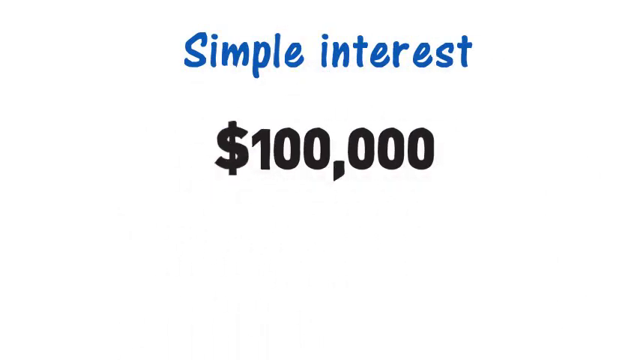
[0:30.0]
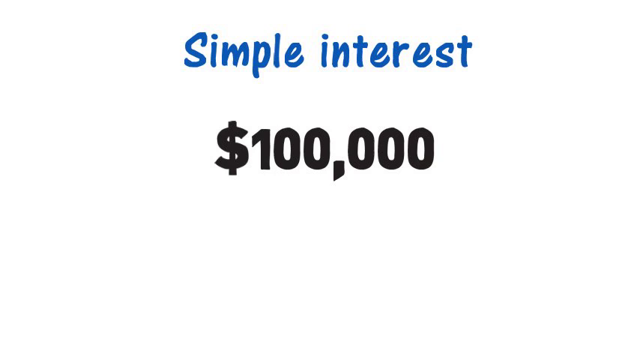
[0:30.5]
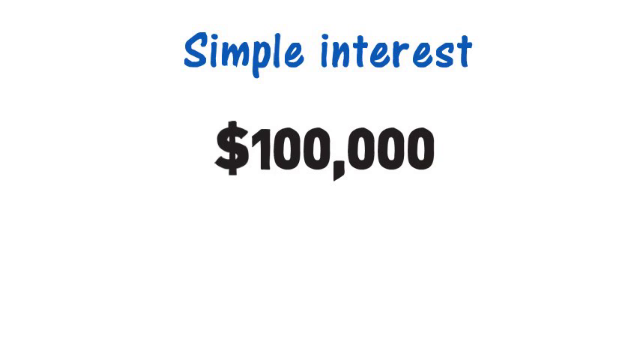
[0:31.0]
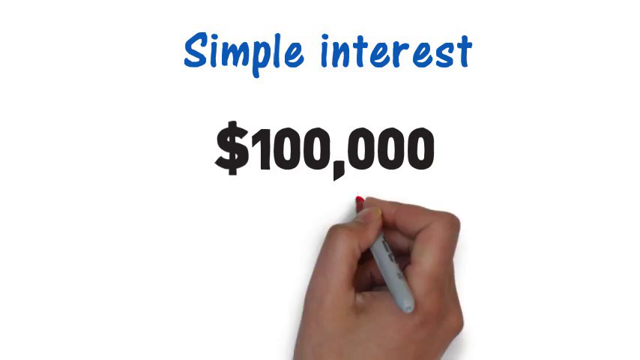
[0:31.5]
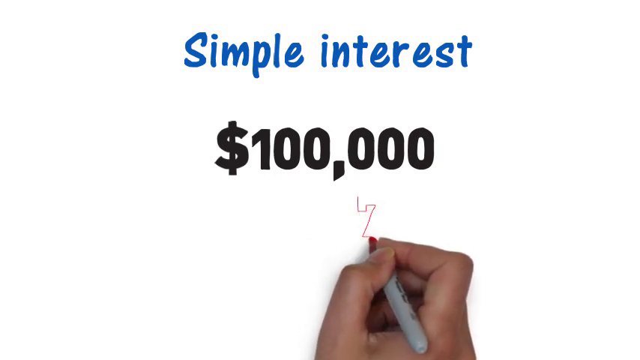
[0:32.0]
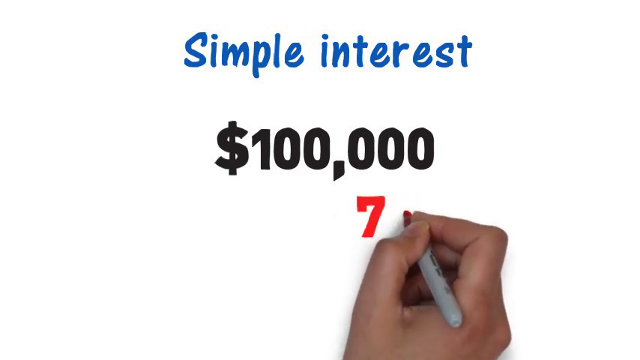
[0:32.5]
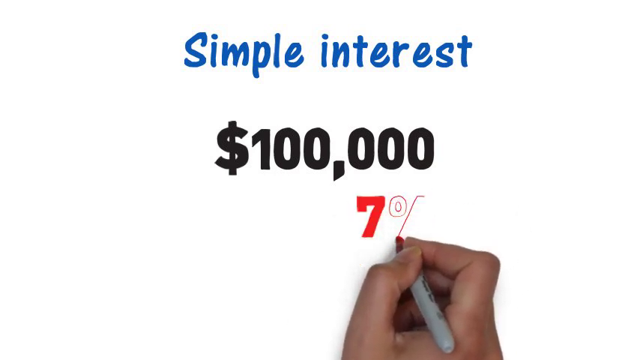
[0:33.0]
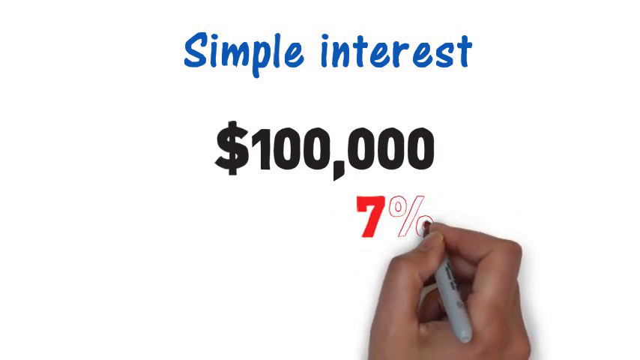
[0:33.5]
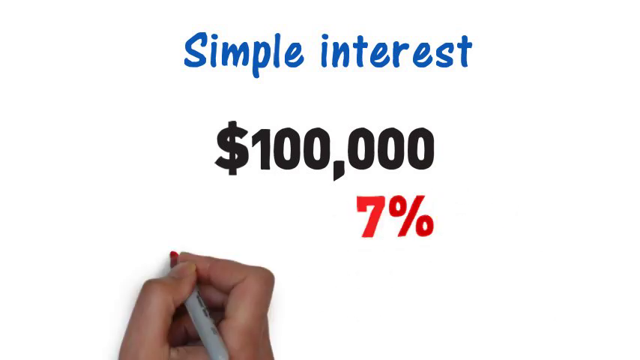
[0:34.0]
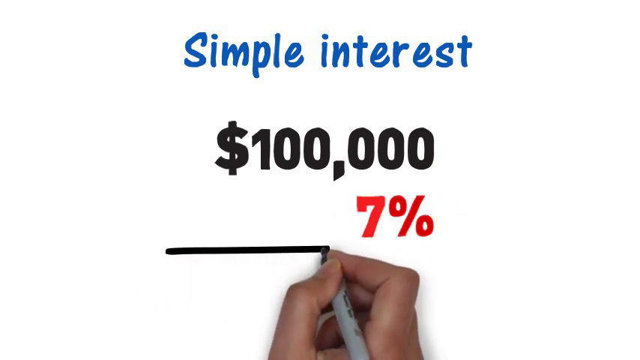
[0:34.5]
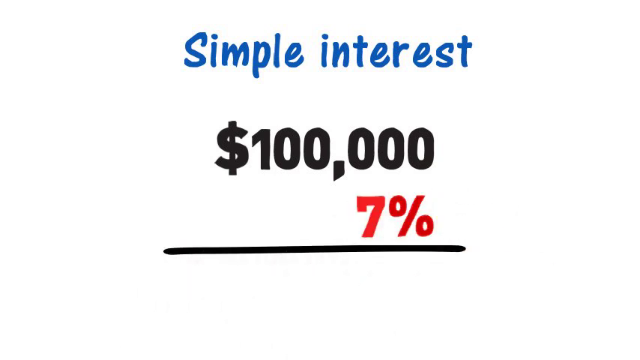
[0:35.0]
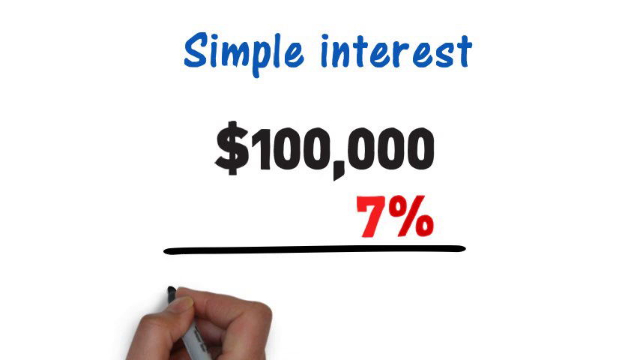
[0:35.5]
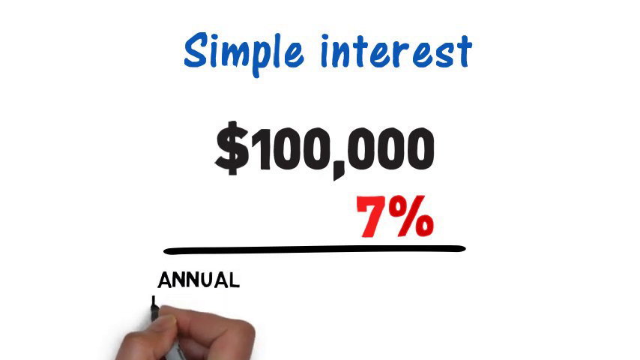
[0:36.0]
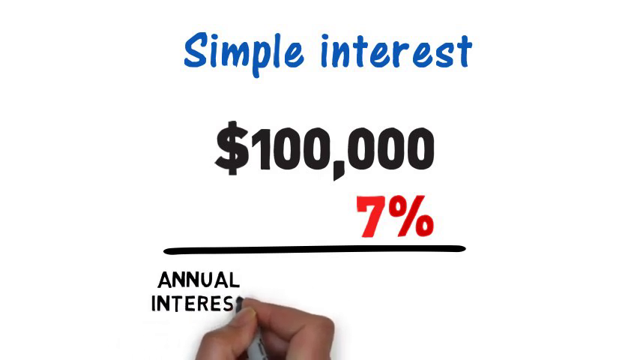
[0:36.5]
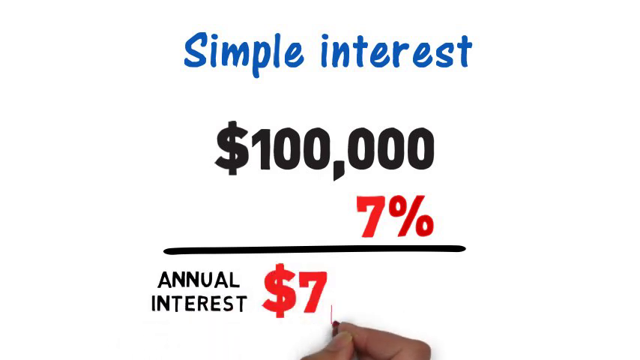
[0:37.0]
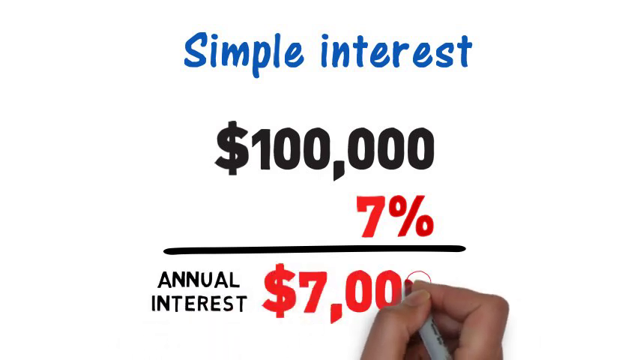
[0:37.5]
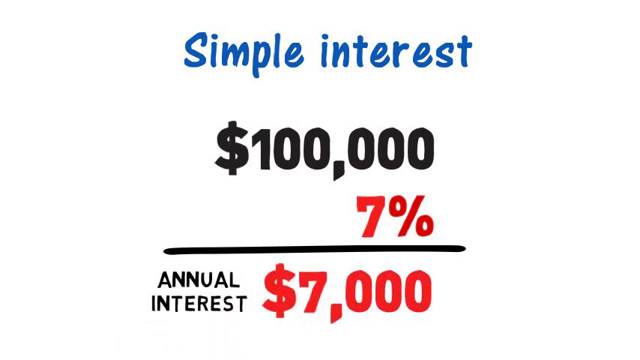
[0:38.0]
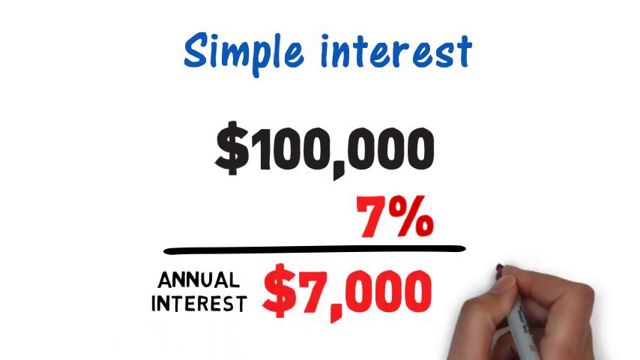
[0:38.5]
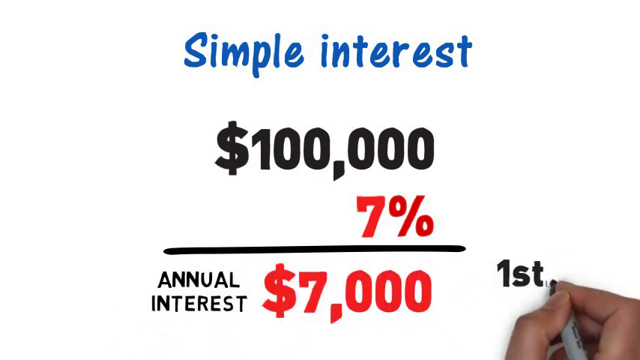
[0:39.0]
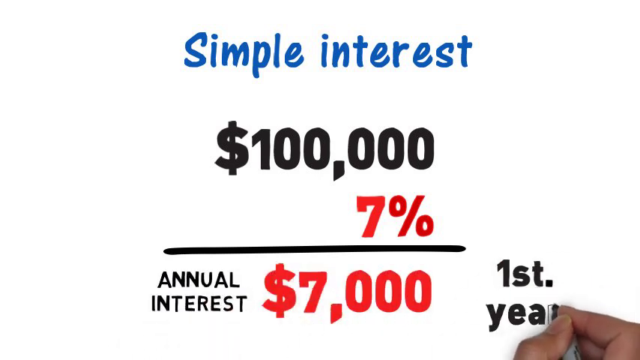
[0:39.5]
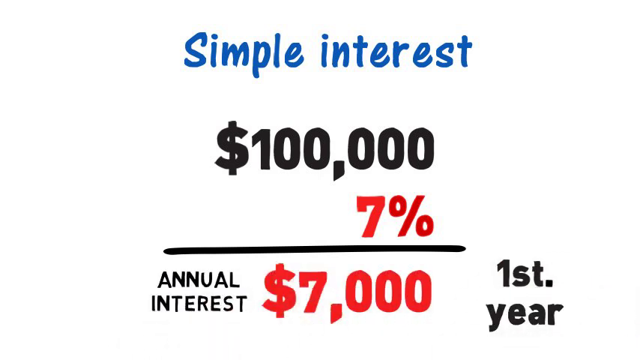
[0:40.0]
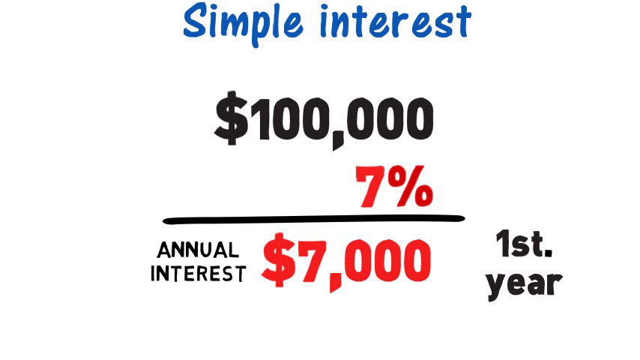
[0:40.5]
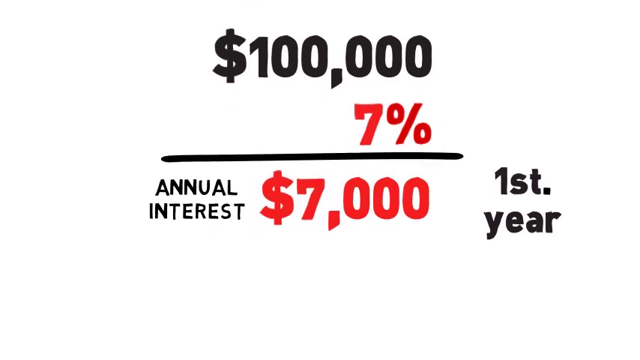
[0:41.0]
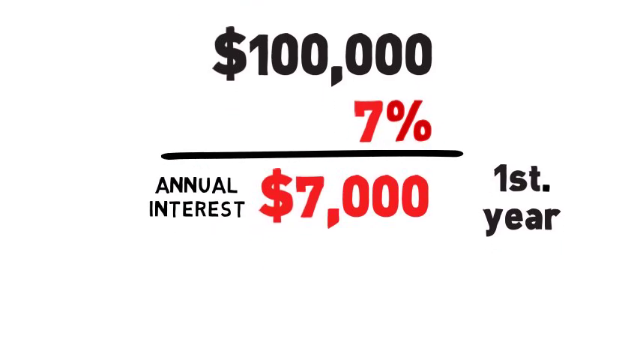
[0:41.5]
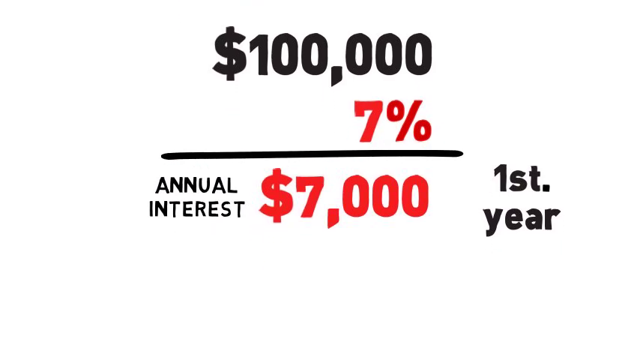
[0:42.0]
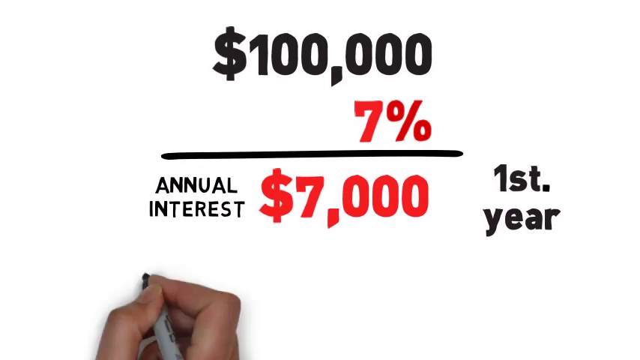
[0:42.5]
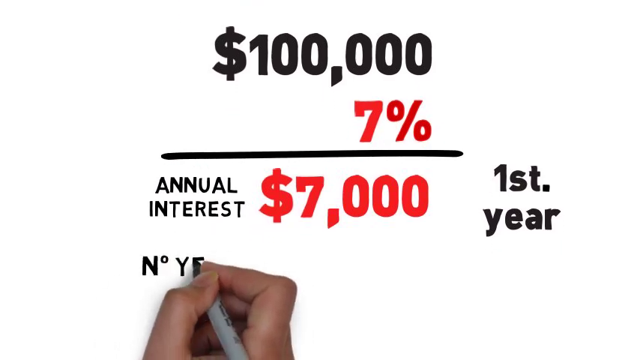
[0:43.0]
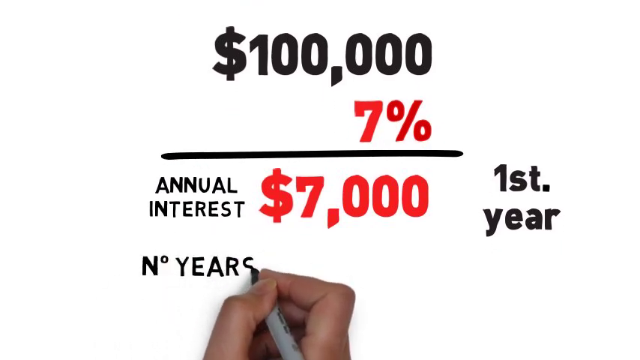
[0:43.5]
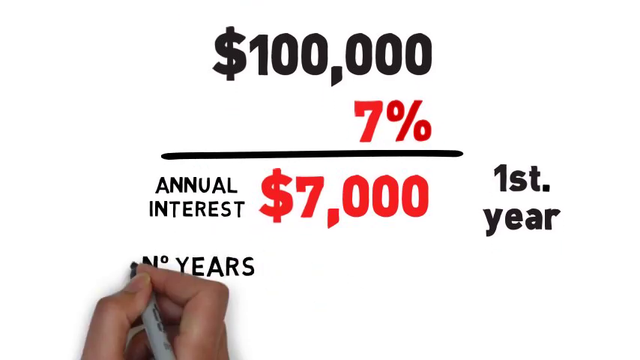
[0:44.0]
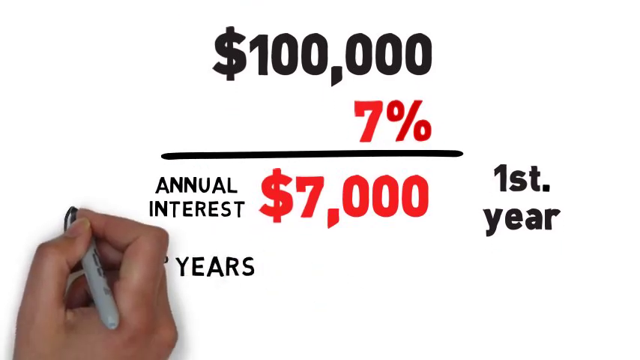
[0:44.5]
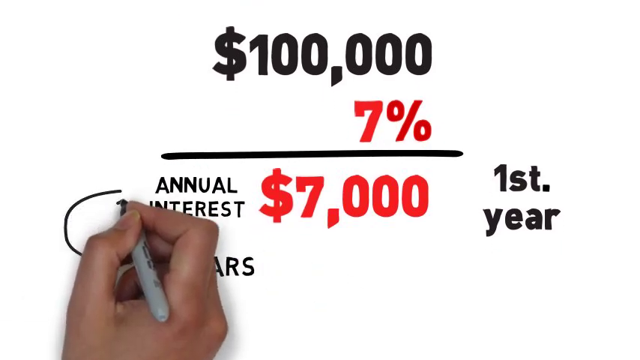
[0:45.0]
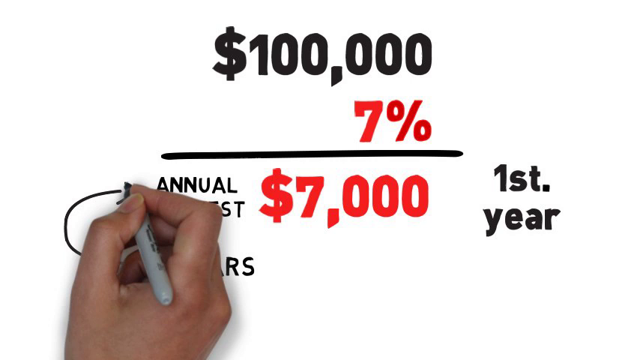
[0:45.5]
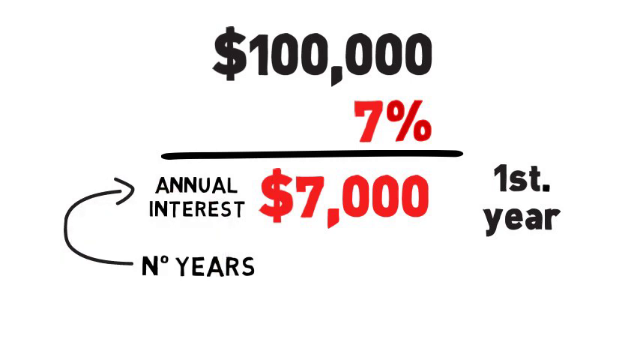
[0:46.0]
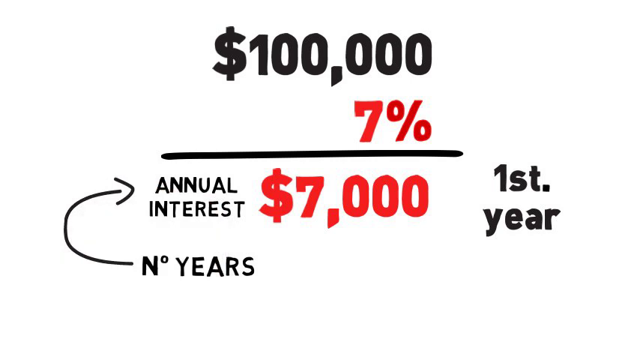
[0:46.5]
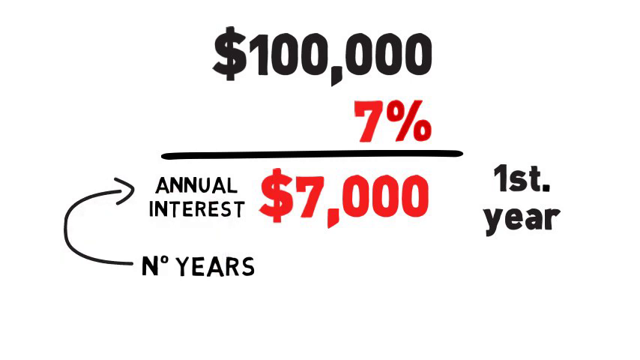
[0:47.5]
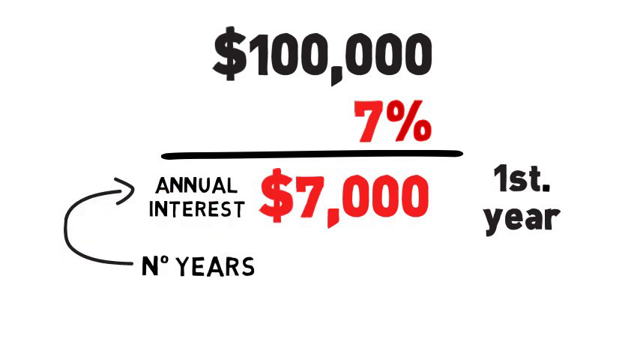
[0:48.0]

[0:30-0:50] The amount "$100,000" is shown with "Simple Interest" above it. The hand draws "7%" in red below the amount, then a line, and another line reading "Annual Interest $7,000" for the first year. Below that it writes "N amount of years" and draws an arrow pointing to the earlier "Annual Interest" text. The example apparently illustrates how much $100,000 would generate per year at 7% annual interest.